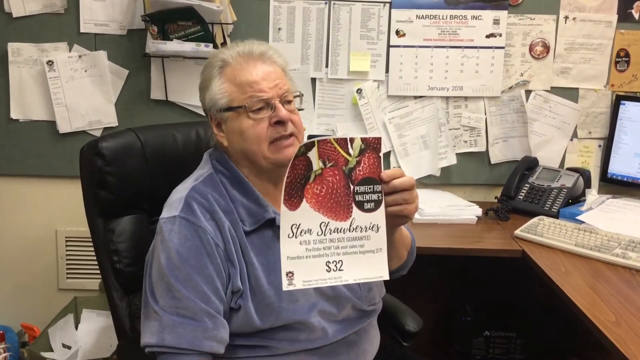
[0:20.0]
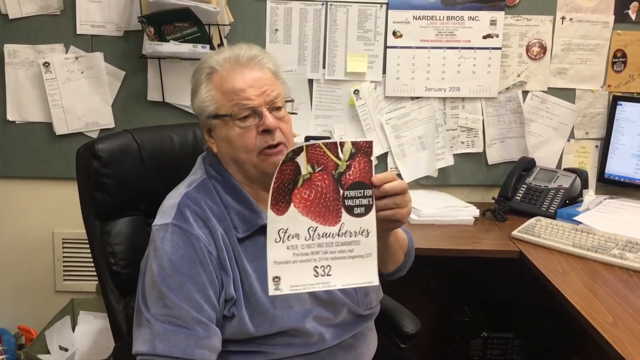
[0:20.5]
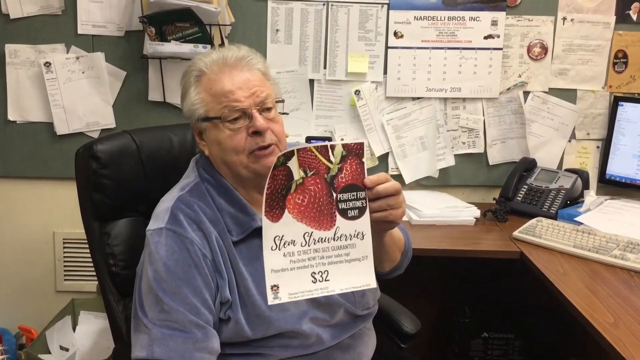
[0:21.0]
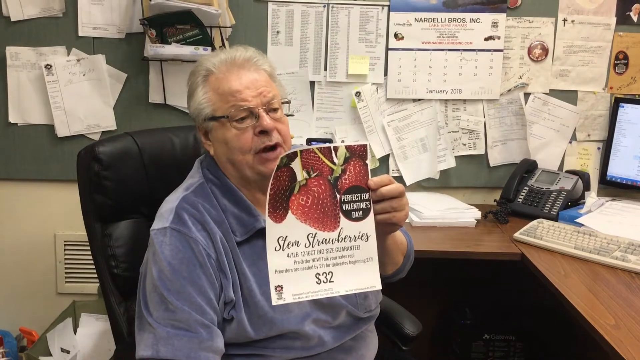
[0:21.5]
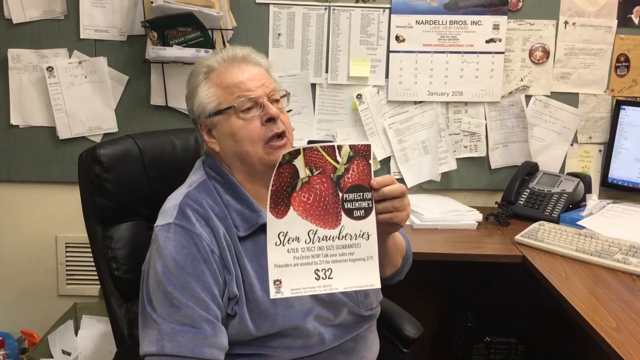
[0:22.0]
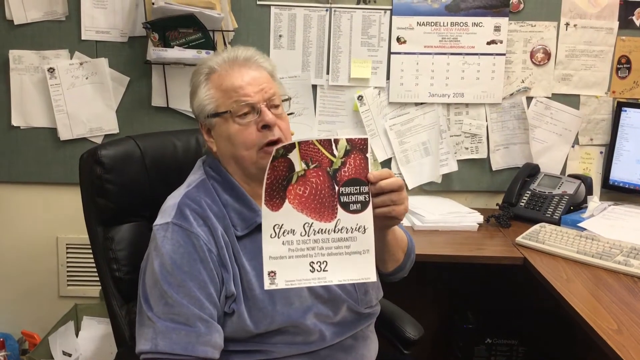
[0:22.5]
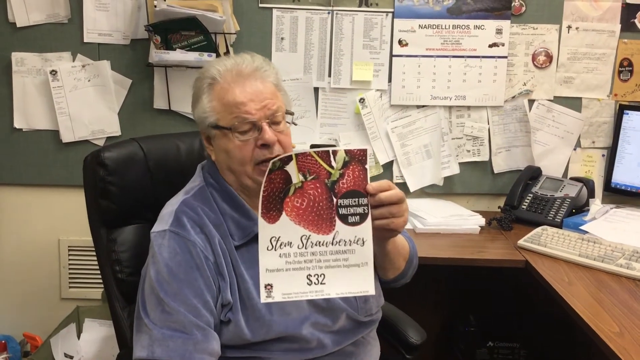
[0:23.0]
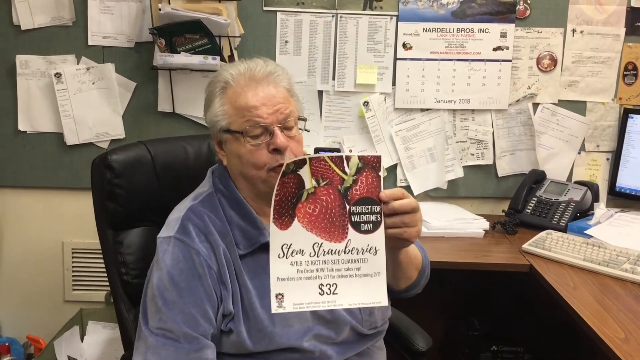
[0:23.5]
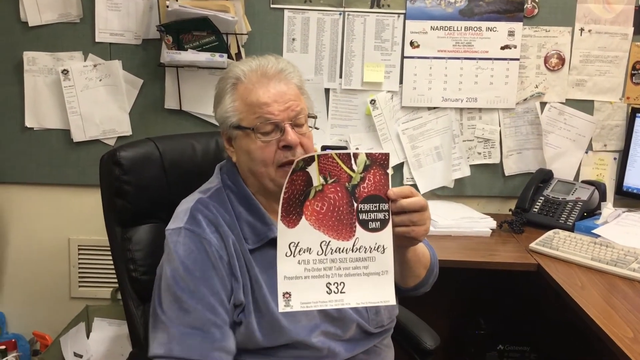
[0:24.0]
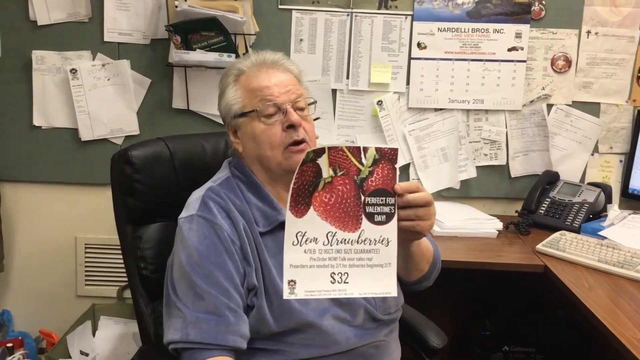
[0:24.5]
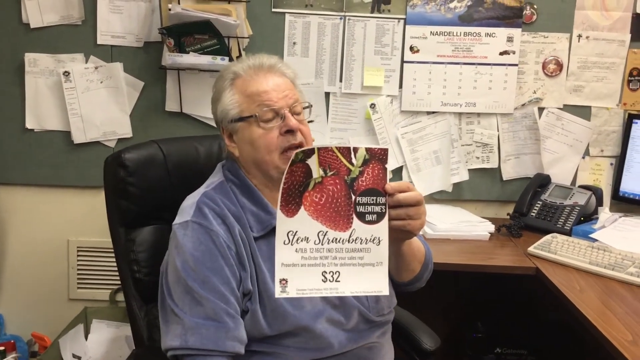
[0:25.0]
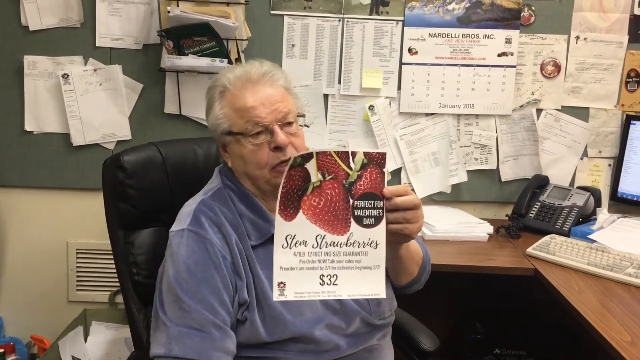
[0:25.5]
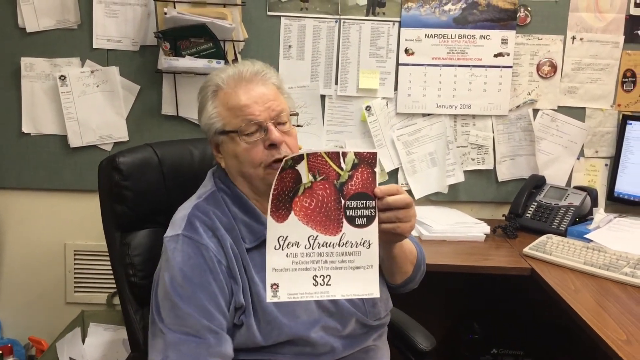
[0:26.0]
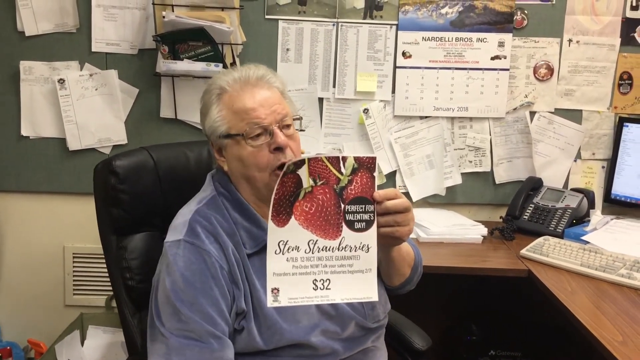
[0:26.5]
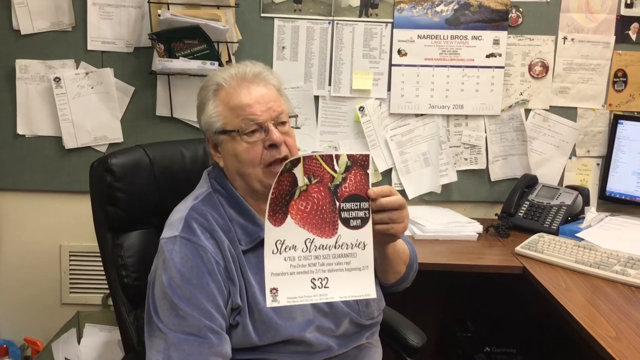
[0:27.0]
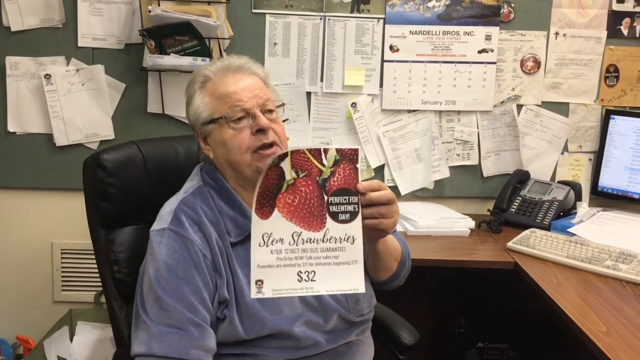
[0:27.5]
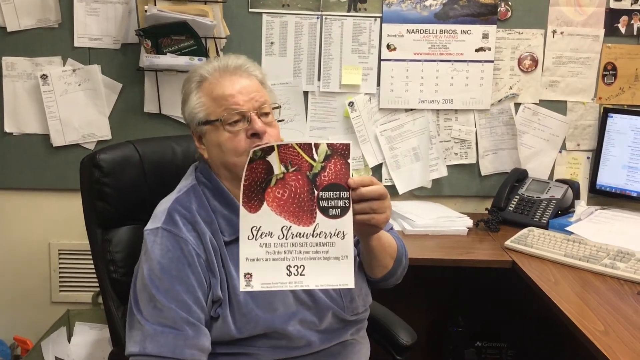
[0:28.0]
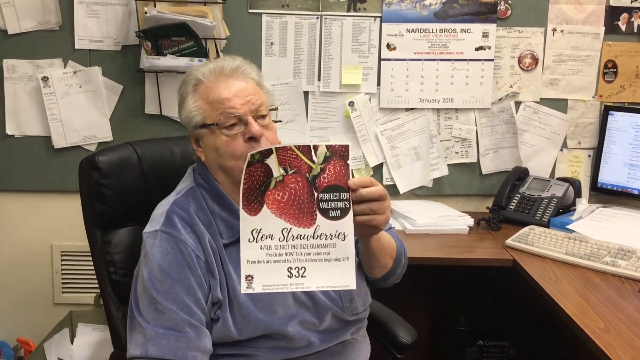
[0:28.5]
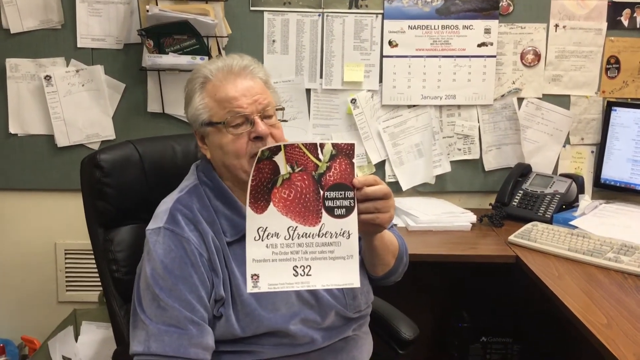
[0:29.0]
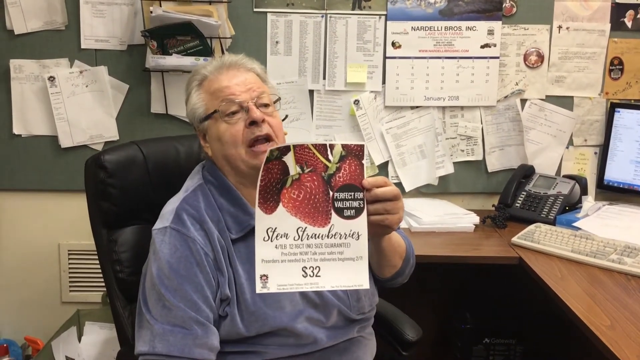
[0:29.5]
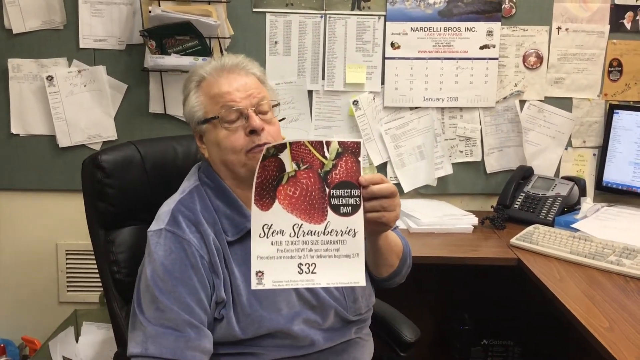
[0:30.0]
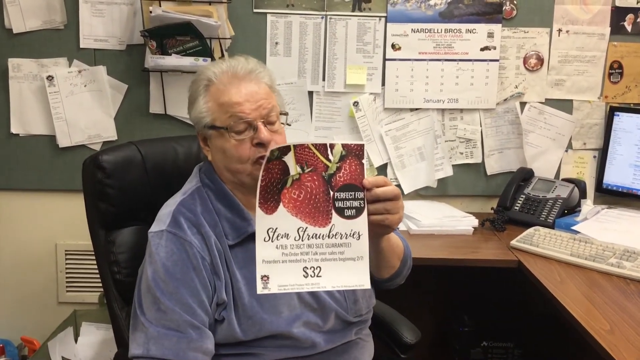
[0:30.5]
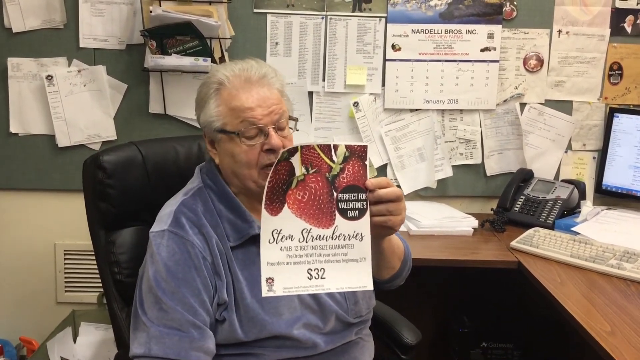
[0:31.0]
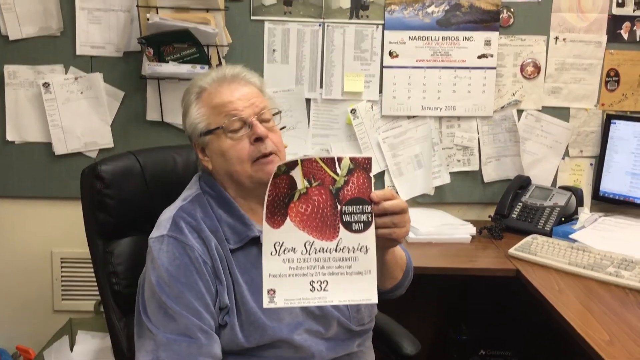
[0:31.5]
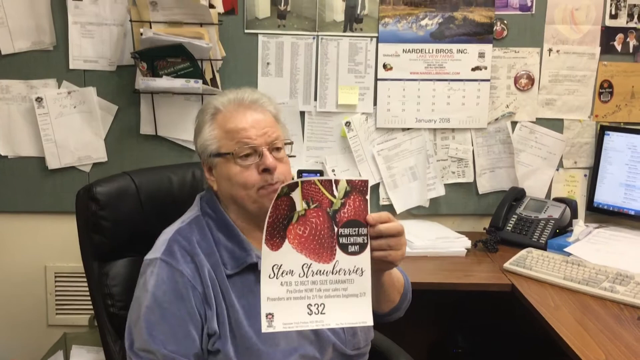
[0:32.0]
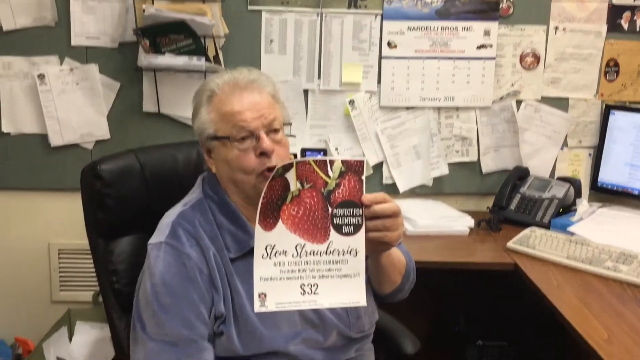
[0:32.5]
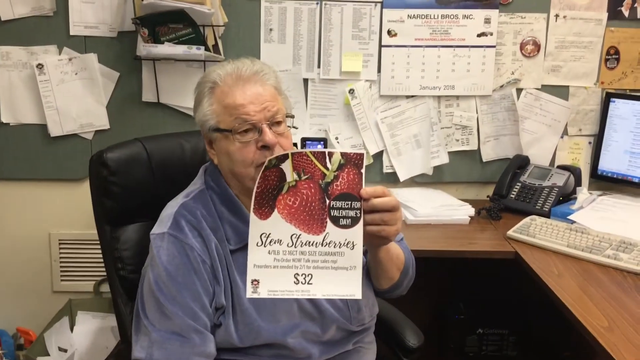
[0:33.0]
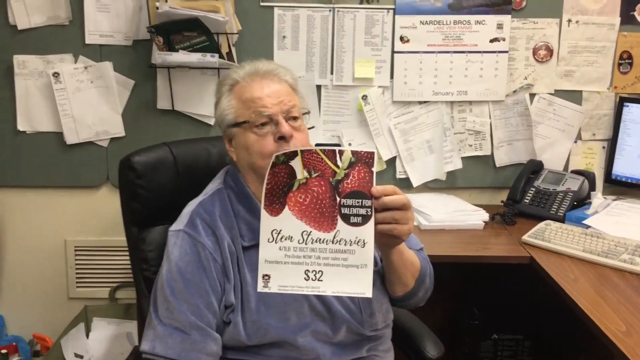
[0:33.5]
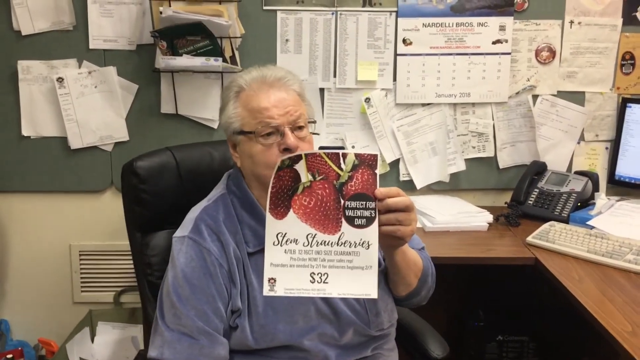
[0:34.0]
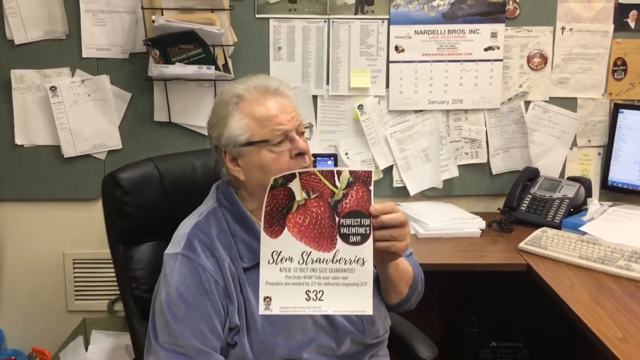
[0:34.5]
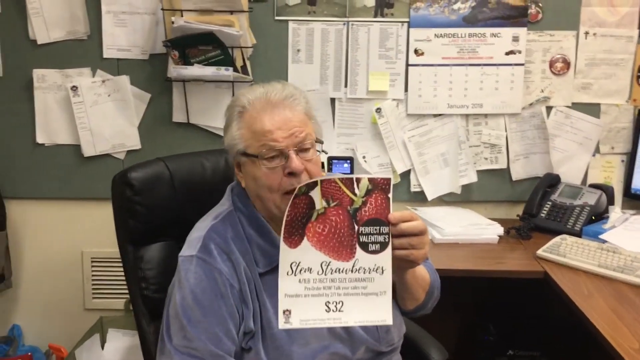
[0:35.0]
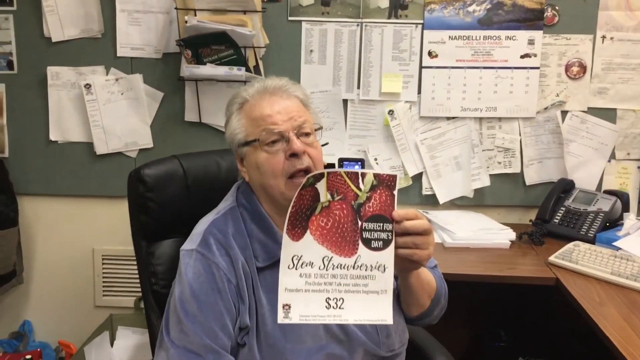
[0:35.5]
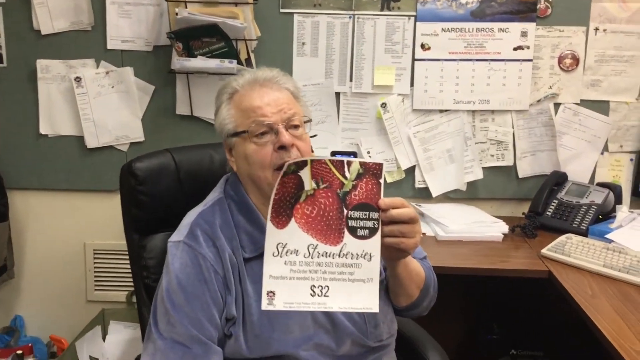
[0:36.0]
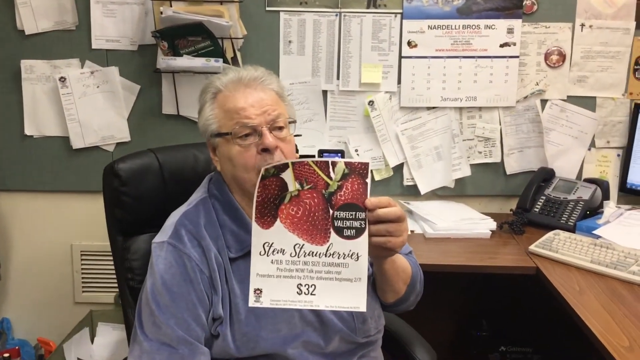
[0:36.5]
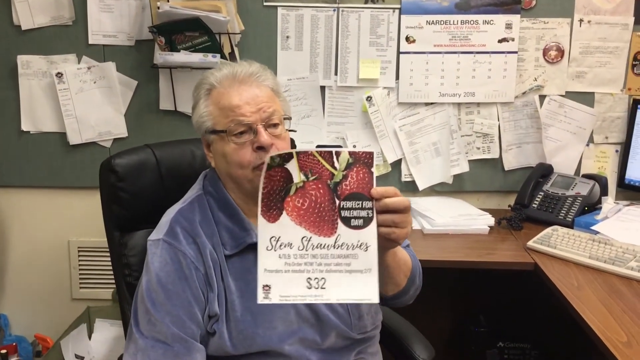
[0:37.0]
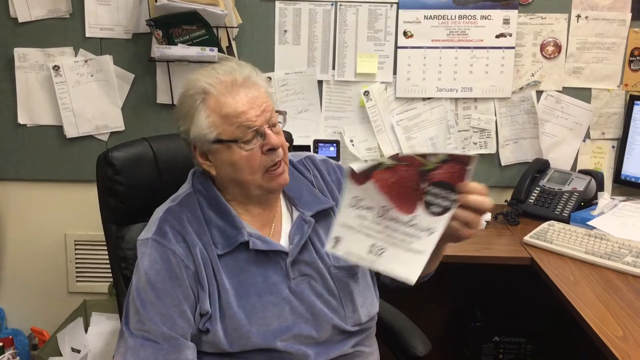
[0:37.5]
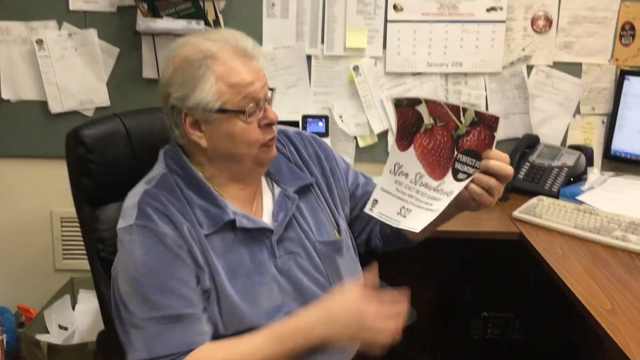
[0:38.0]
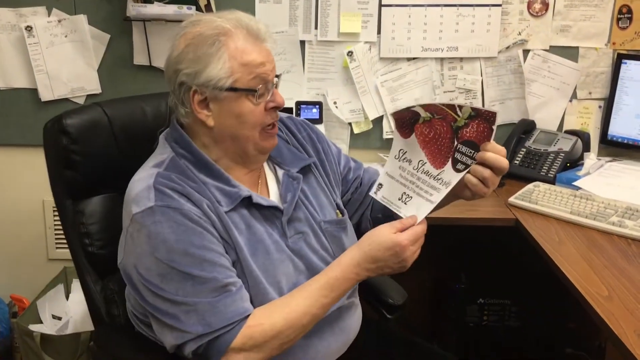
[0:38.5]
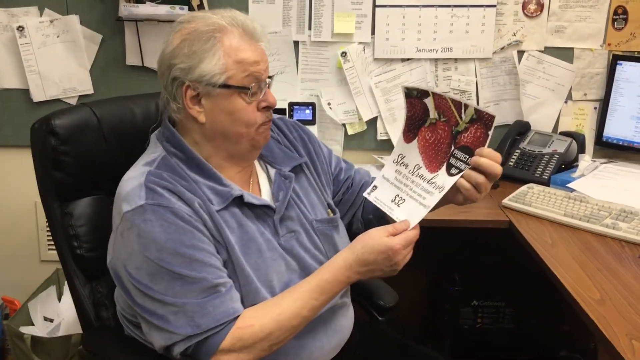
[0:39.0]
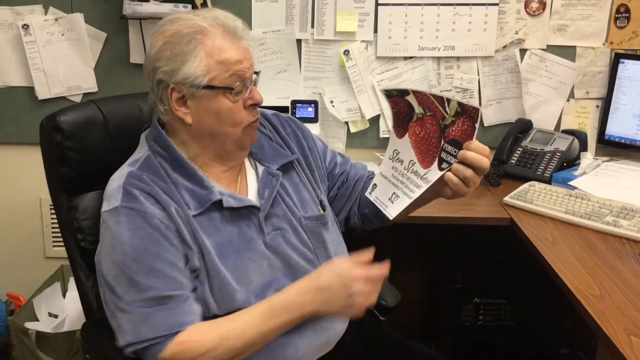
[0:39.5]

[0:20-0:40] The man continues to sit in the office chair and talk, holding the paper with his left hand. The paper says "Steve's Strawberries" and shows a price of $32. He talks very fast, his mouth moving quickly. He holds the paper right in front of him so that it slightly covers the bottom part of his face. He then holds the paper up in front of his face with its front facing him. To the right are a telephone, a computer keyboard and a computer screen. Many different papers hang on the wall behind the man, and a hanging calendar on the right side of the wall appears to say "January 2018". While he talks, the black office chair moves as he shifts slightly to the left and right.